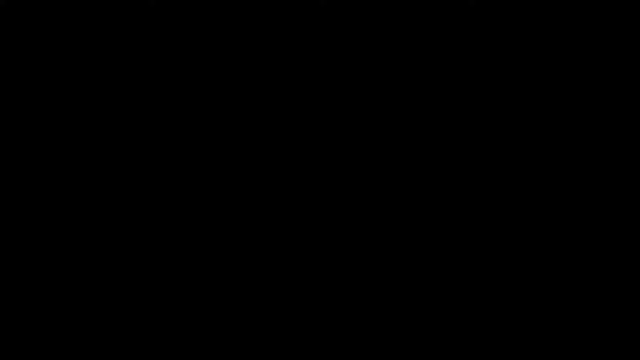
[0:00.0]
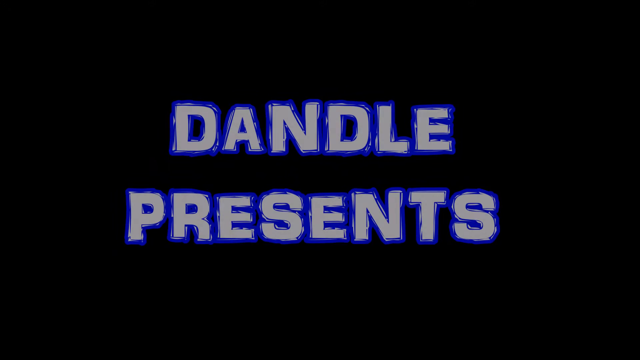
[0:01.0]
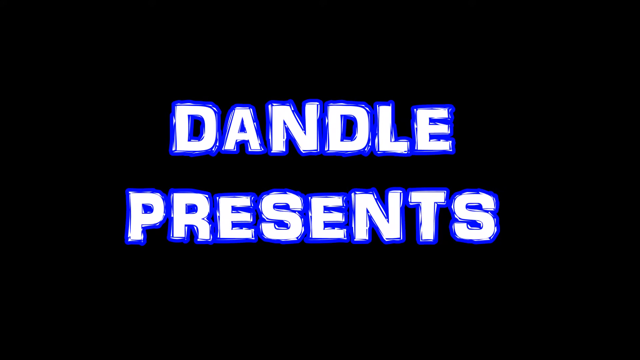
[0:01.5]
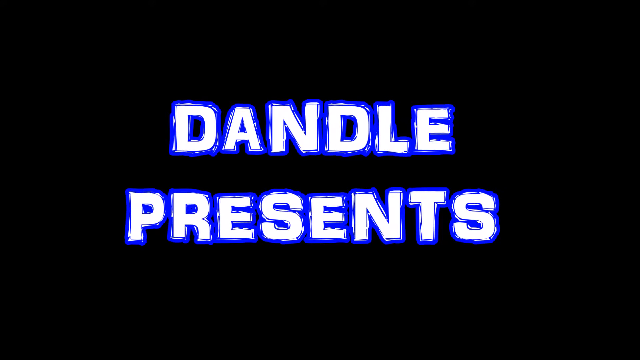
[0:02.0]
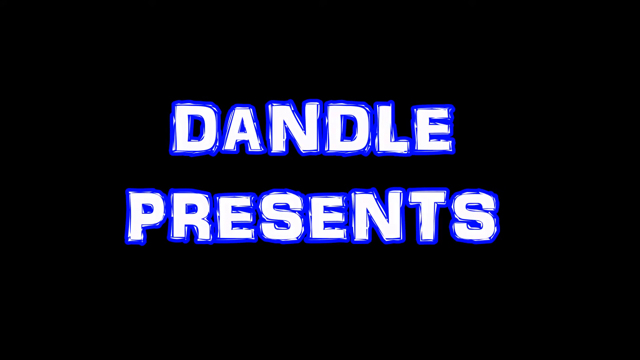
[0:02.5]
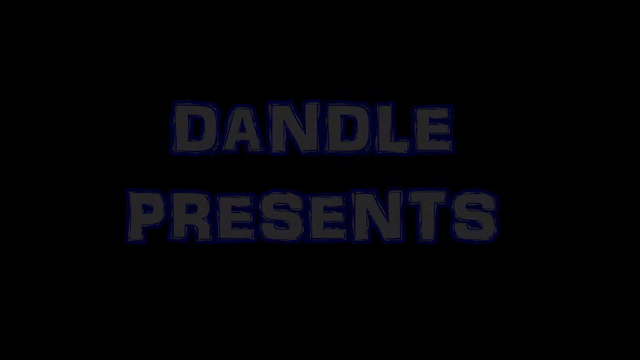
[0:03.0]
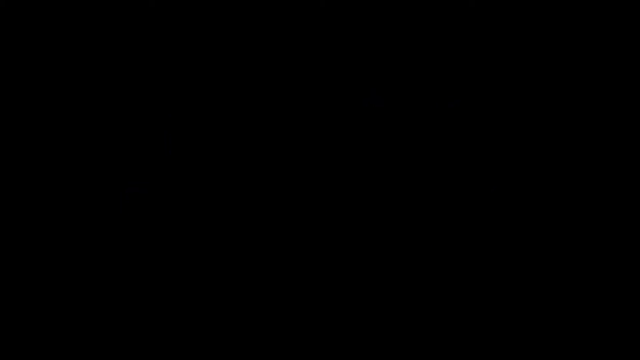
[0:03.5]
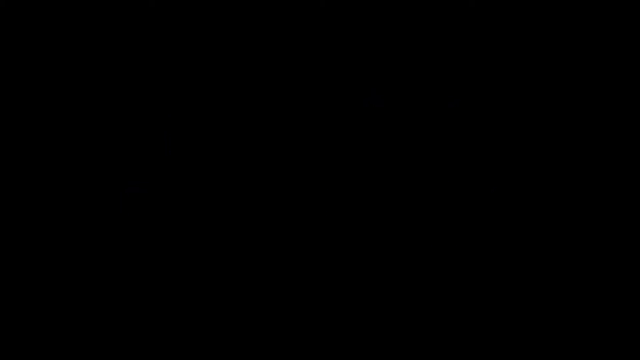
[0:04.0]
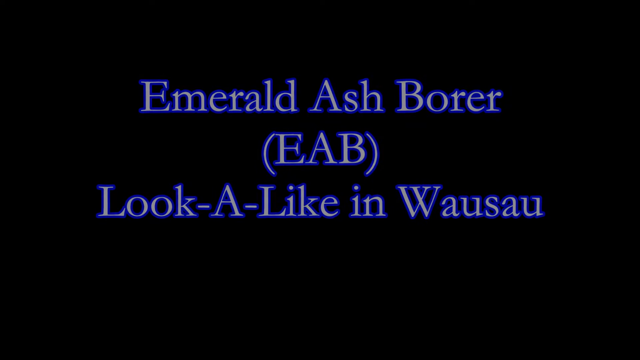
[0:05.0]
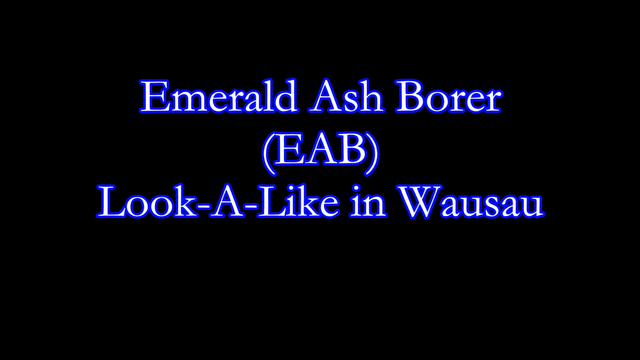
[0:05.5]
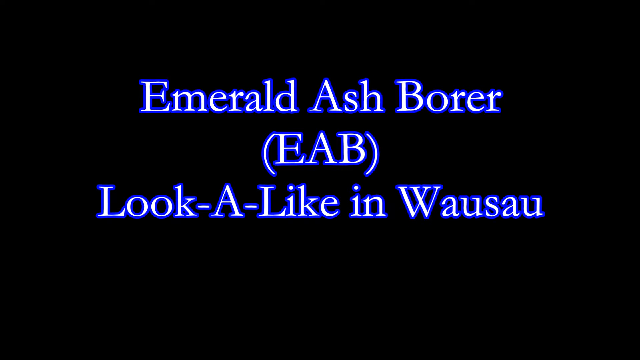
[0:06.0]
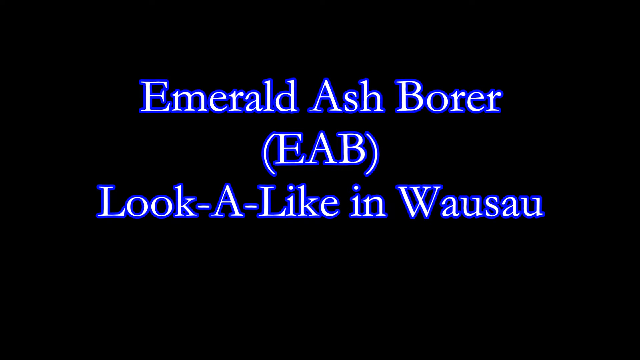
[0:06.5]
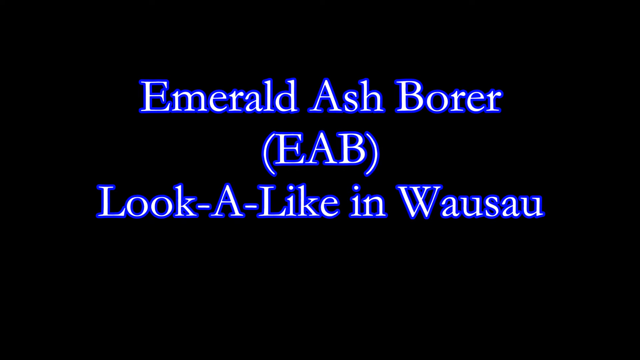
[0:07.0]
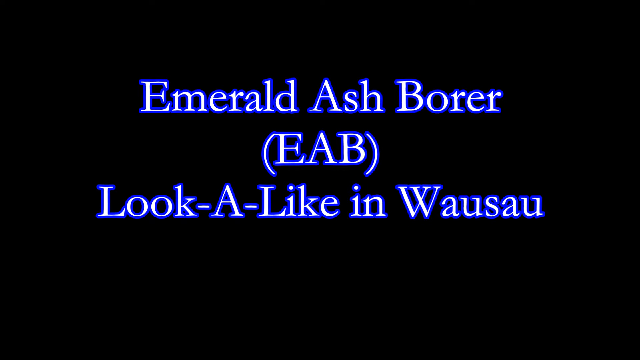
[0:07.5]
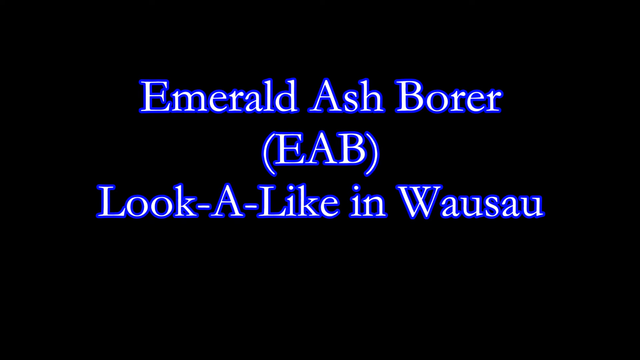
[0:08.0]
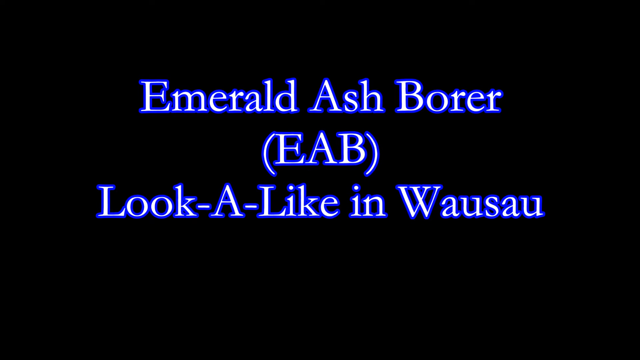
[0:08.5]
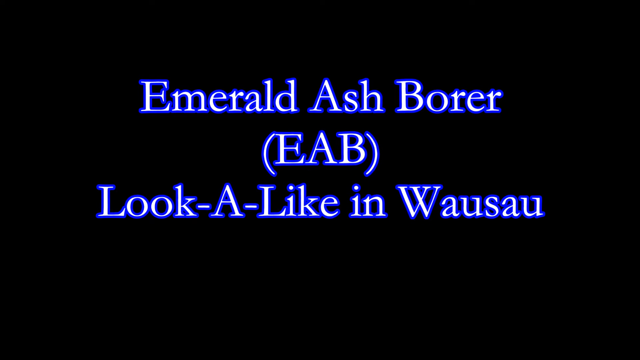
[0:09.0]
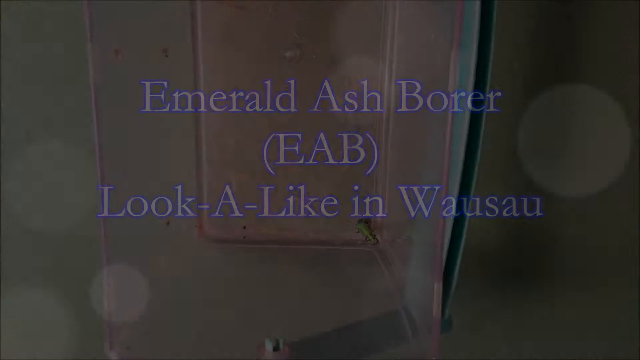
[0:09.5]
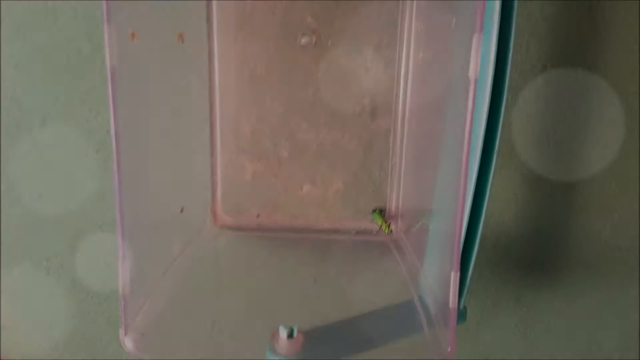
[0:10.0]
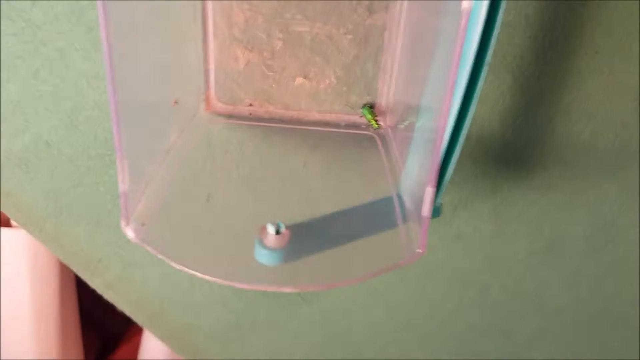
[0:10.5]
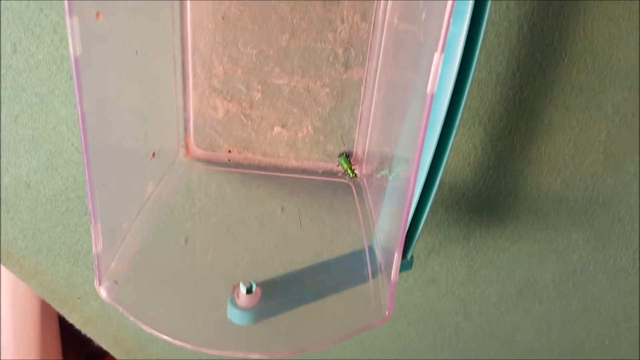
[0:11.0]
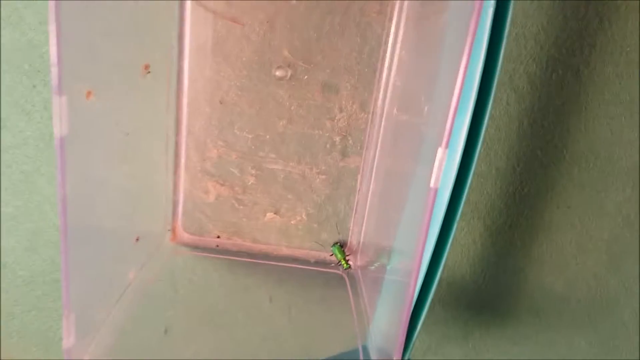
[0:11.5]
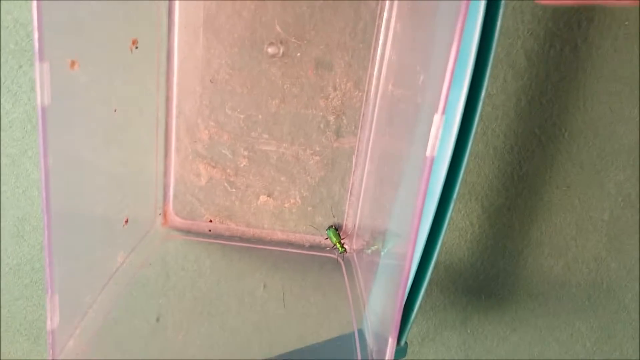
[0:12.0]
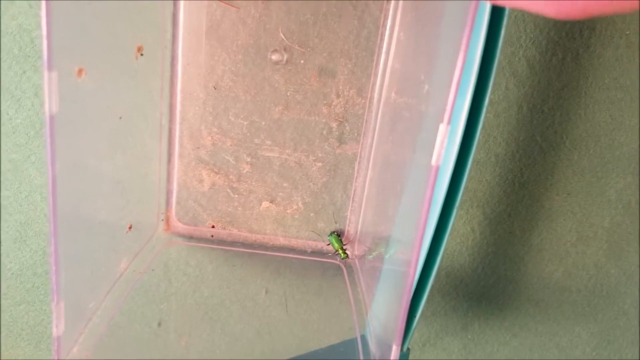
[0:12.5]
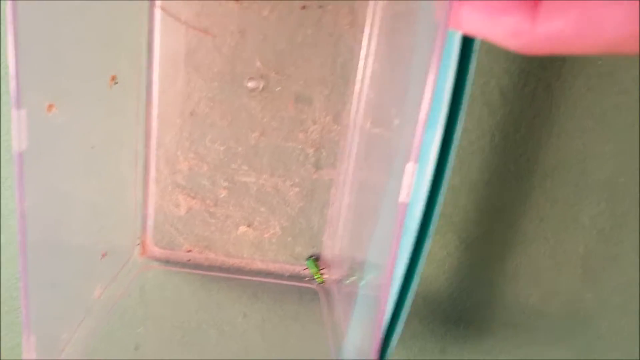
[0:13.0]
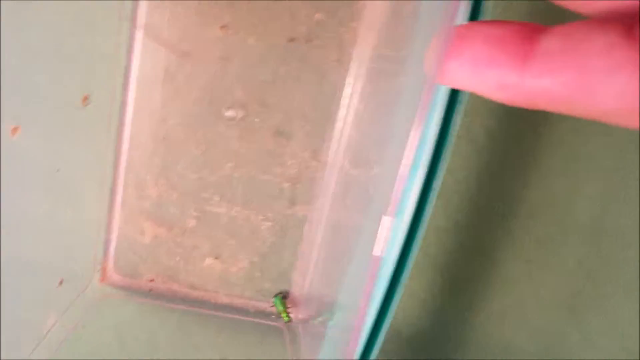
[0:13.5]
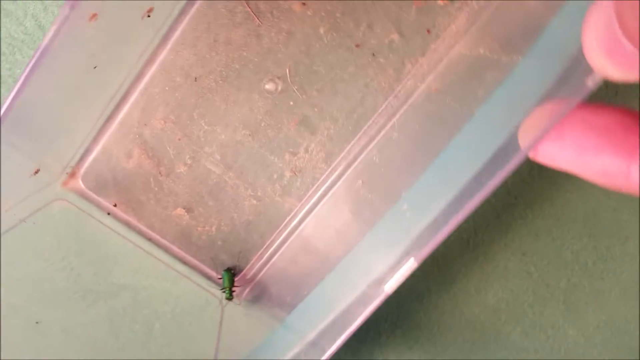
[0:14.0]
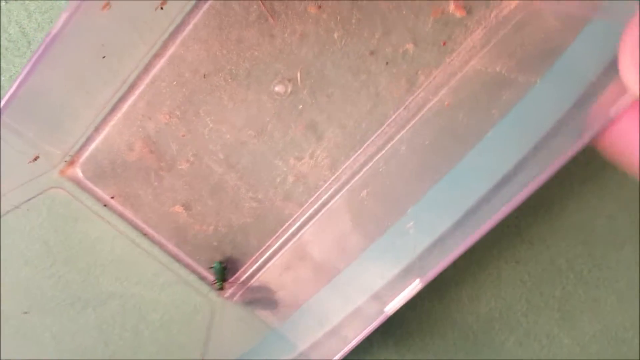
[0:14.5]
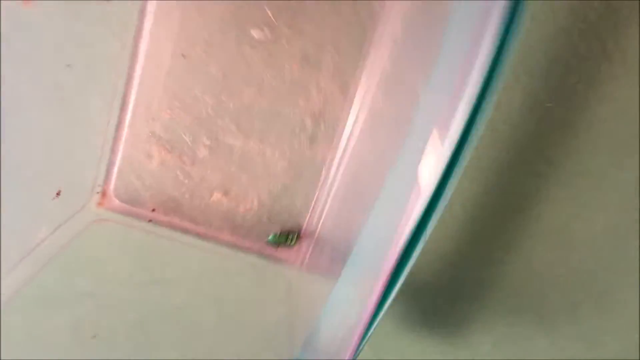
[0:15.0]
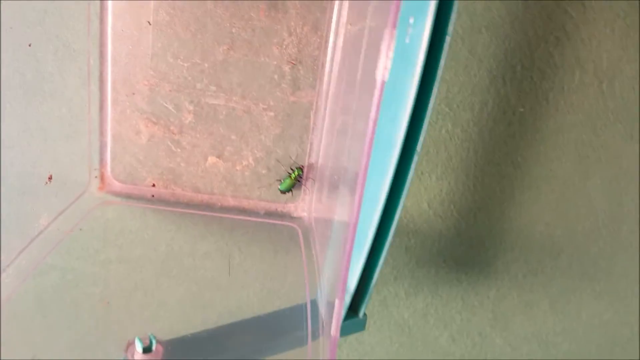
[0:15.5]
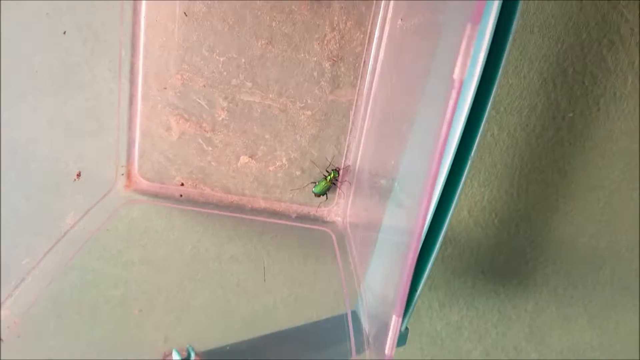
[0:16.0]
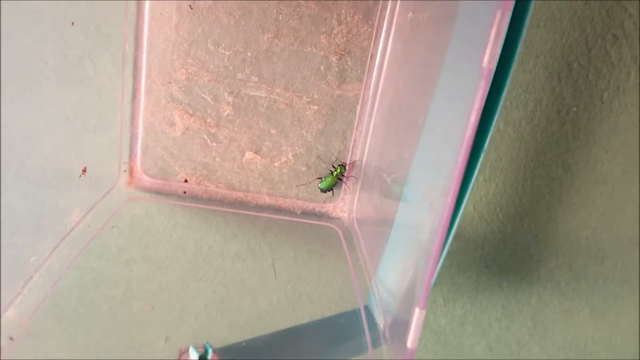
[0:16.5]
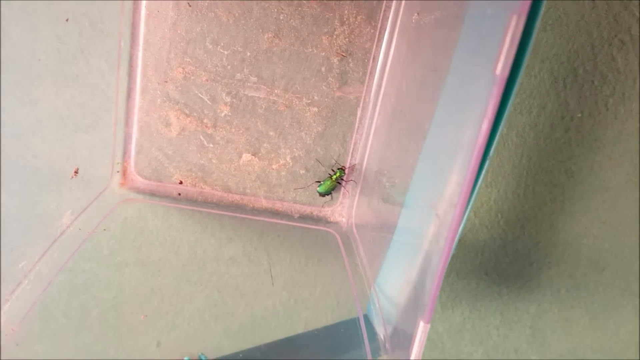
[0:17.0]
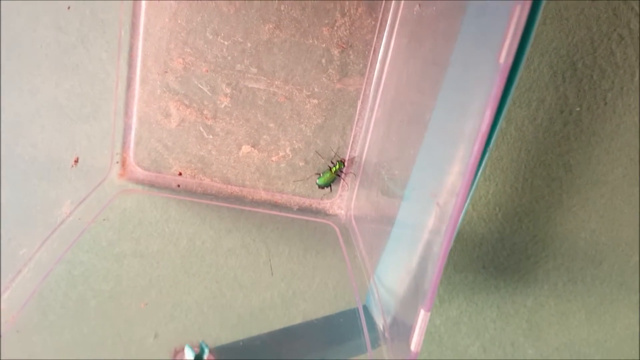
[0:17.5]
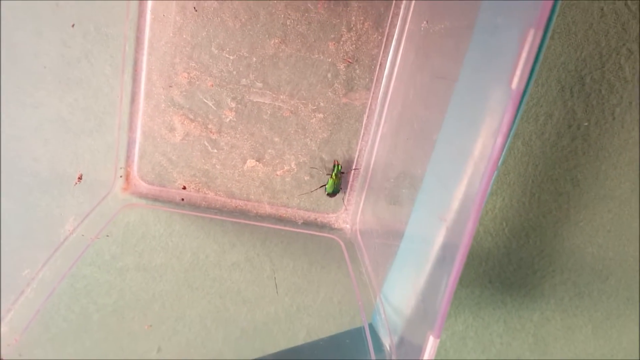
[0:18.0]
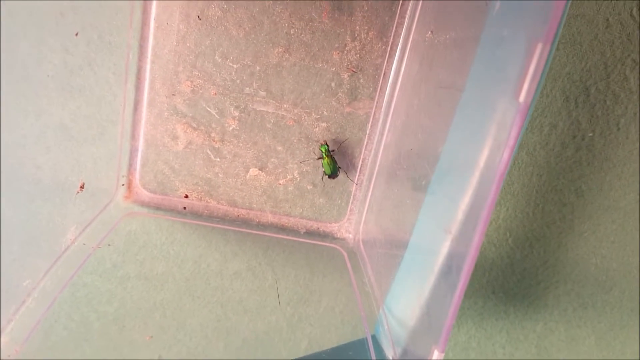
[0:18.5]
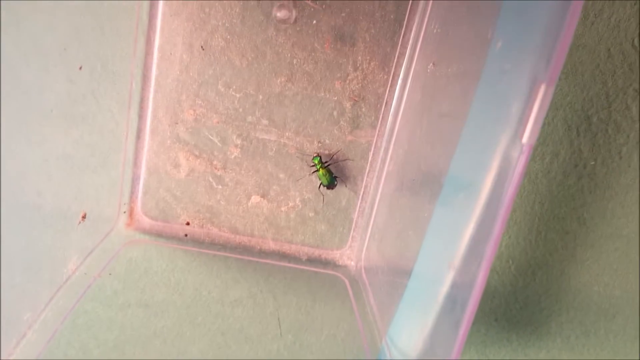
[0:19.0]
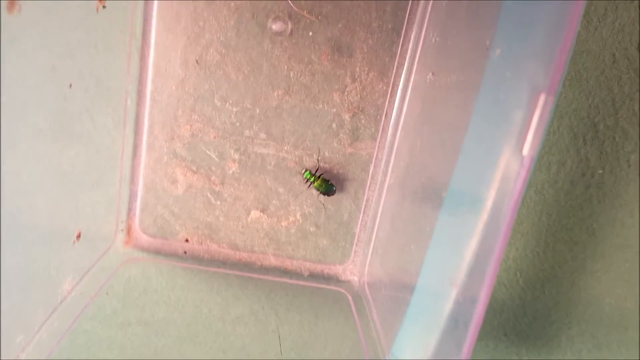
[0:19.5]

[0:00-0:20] The video opens on an all-black screen with the words "Dandle presents" in a white bold font with a dark neon blue outline. This fades away, and in a smaller font the text "Emerald Ash Borer EAB lookalike in Wausau" appears. The view then looks inside a container as a man's hand moves it around. In the container is a green, shiny, very vibrant bug walking around the bottom. The container has a pinkish colour and is on a green table with a little texture. The bug appears to be just under an inch in size and looks like a beetle, being quite shiny with a hard cased shell.